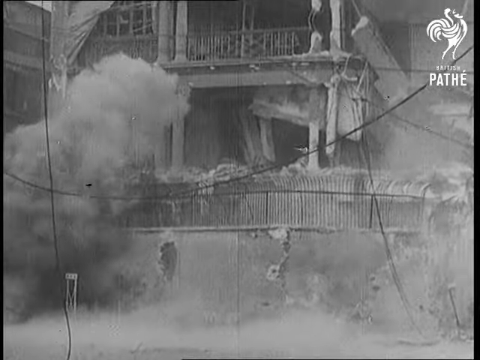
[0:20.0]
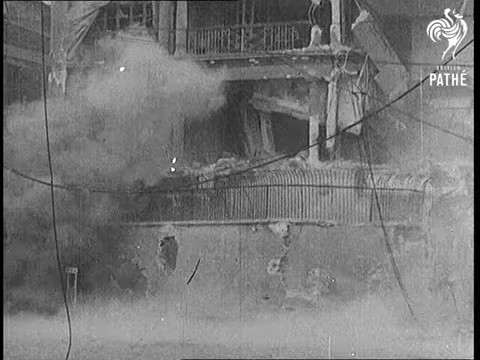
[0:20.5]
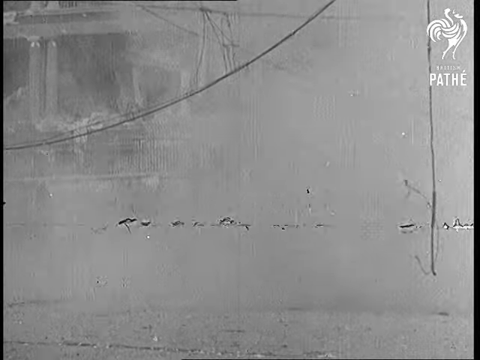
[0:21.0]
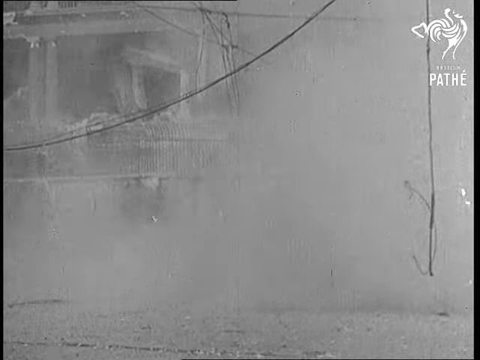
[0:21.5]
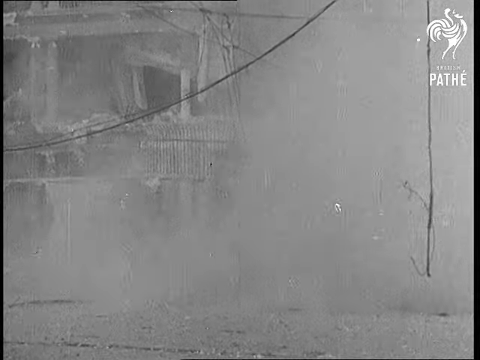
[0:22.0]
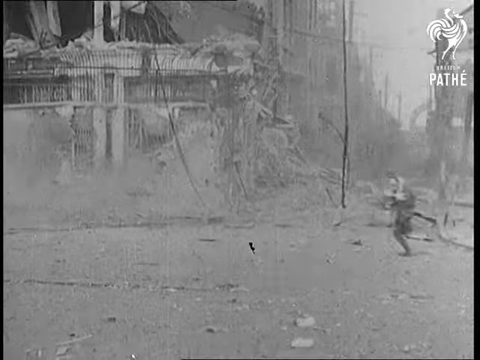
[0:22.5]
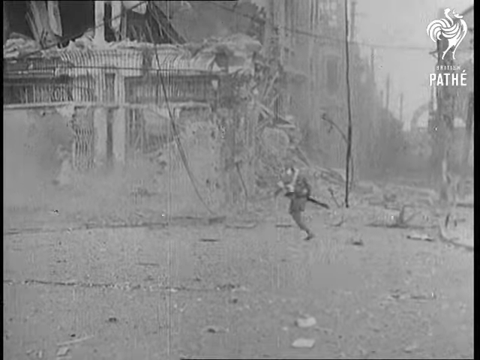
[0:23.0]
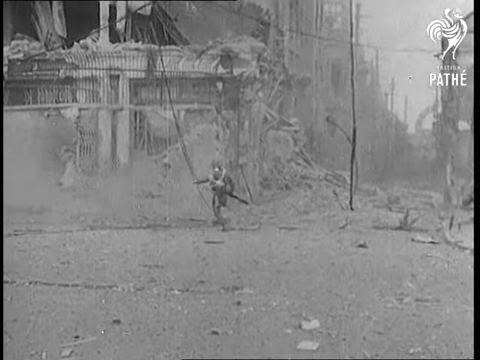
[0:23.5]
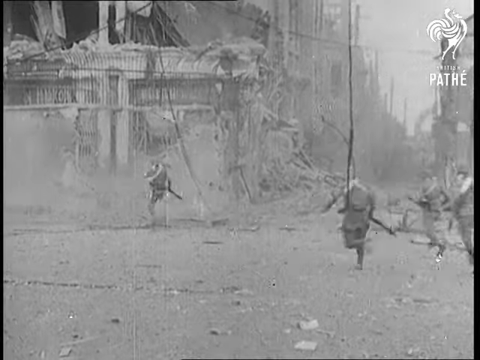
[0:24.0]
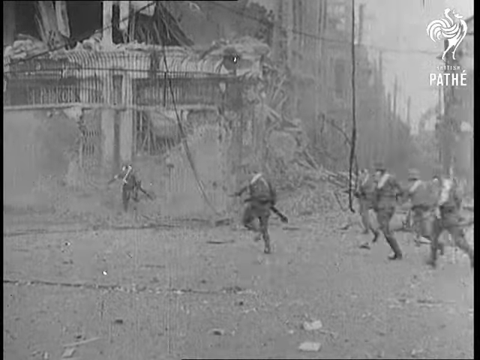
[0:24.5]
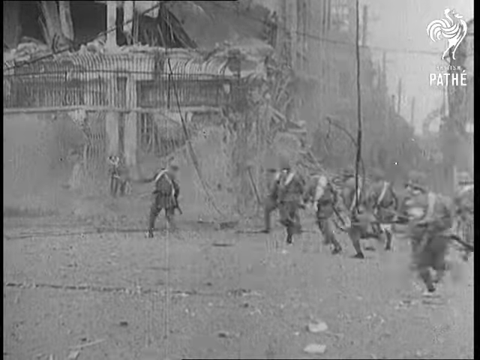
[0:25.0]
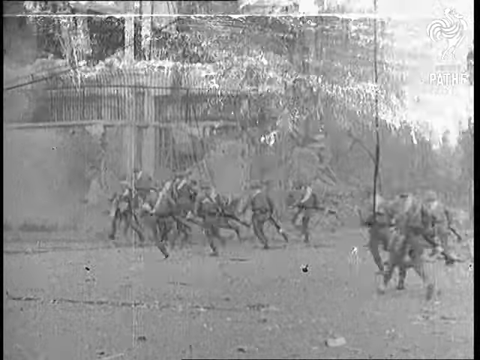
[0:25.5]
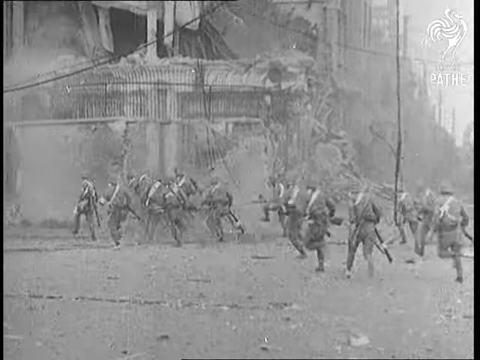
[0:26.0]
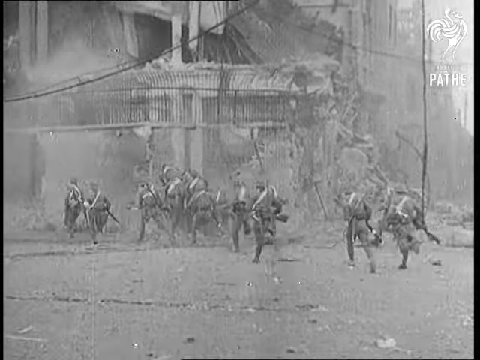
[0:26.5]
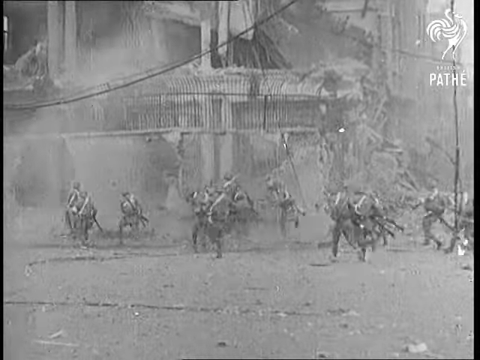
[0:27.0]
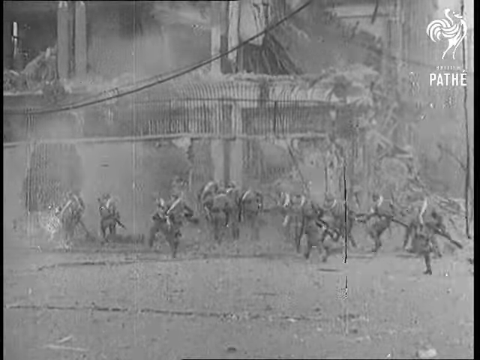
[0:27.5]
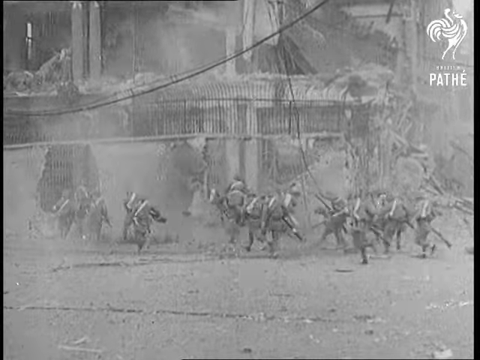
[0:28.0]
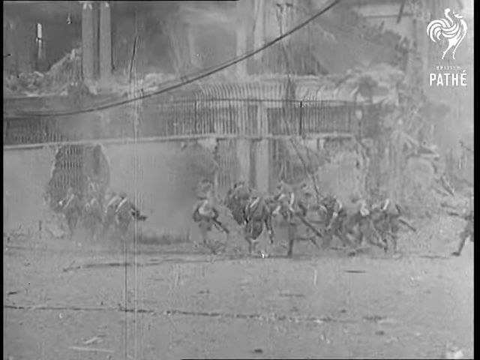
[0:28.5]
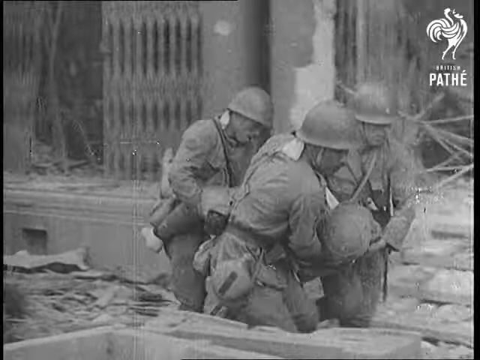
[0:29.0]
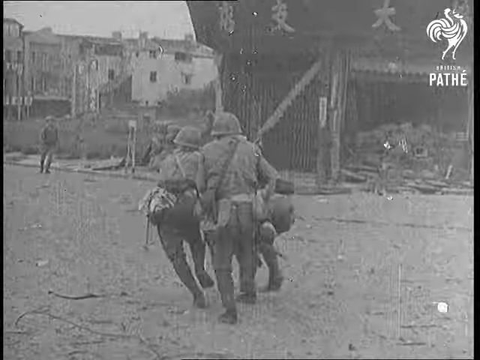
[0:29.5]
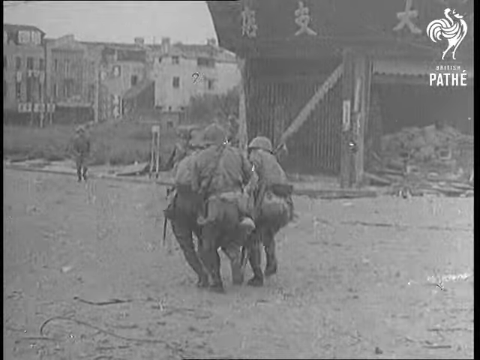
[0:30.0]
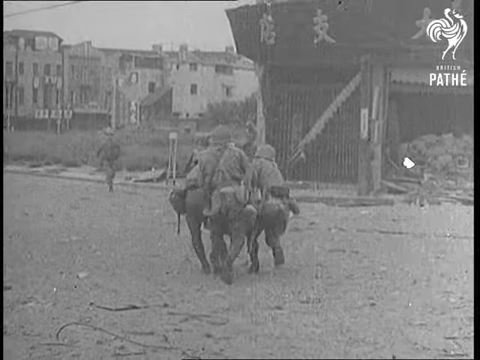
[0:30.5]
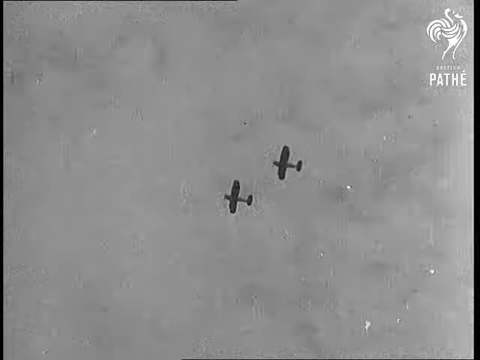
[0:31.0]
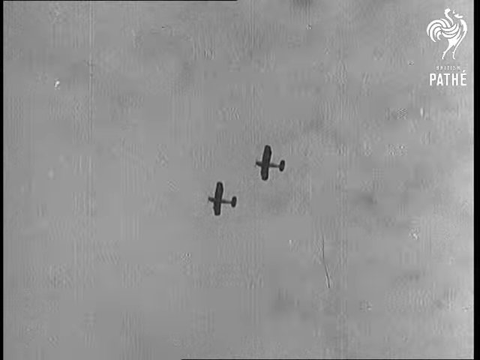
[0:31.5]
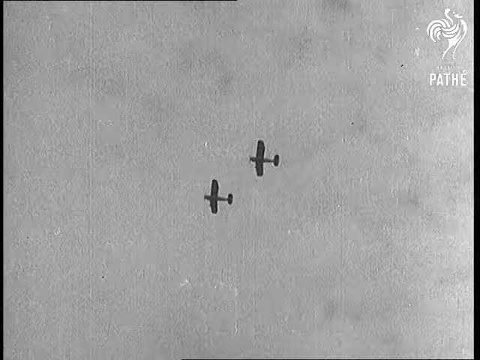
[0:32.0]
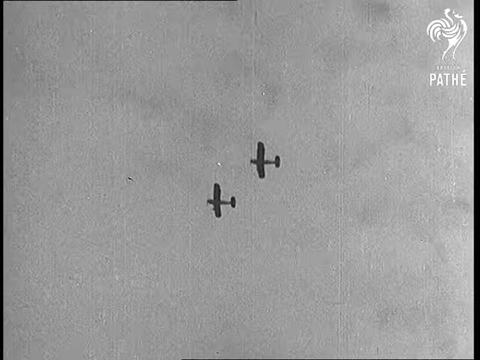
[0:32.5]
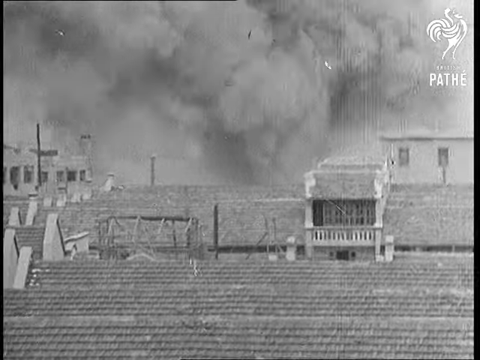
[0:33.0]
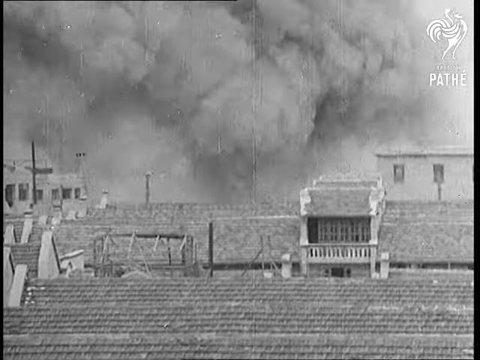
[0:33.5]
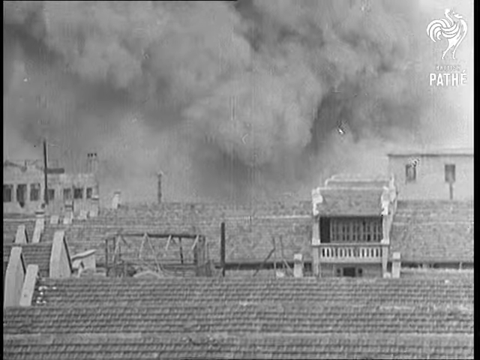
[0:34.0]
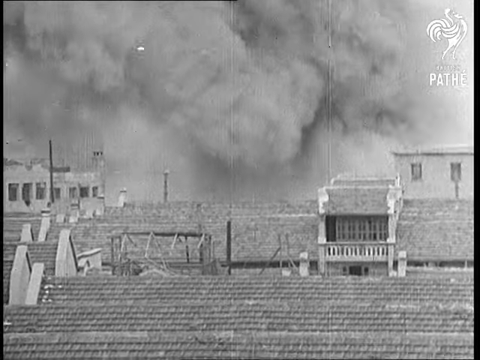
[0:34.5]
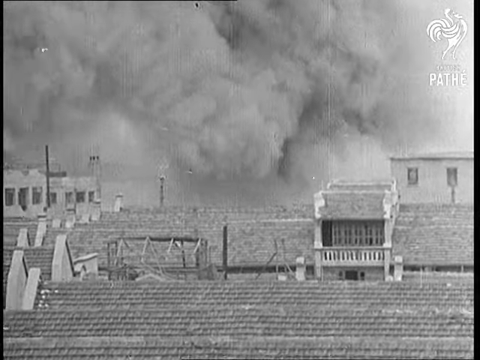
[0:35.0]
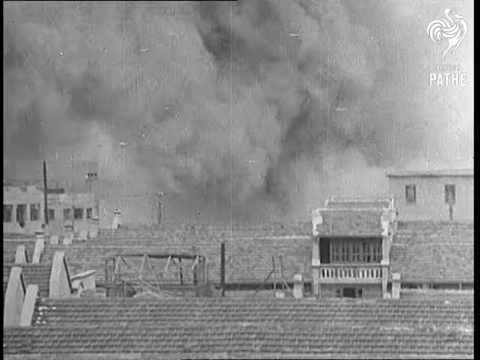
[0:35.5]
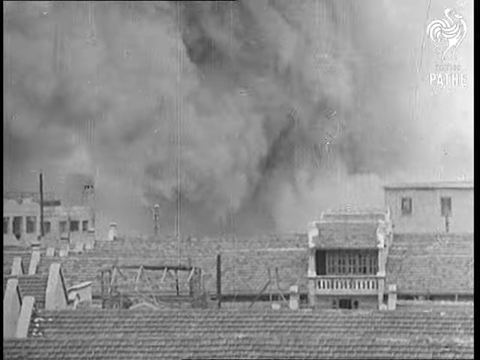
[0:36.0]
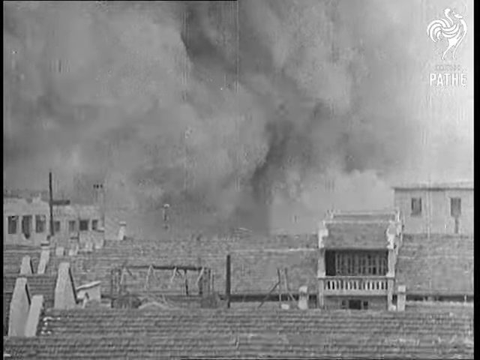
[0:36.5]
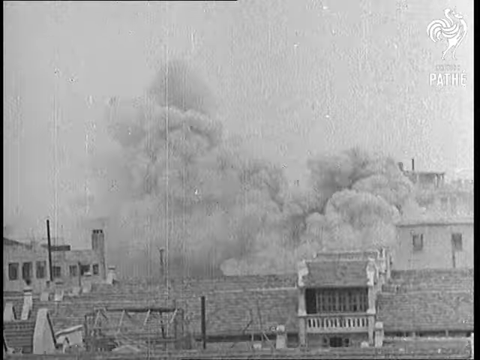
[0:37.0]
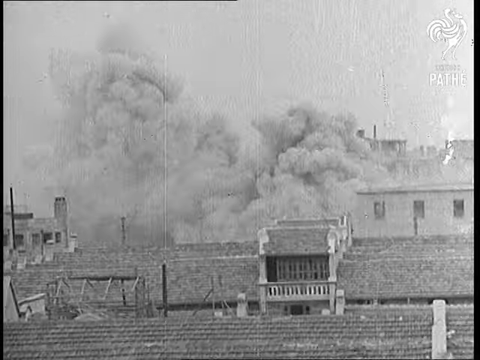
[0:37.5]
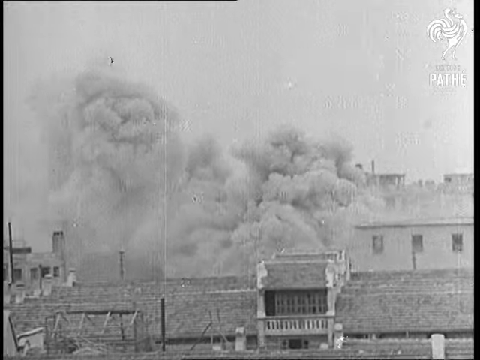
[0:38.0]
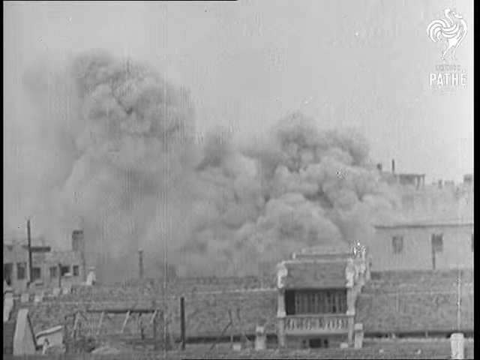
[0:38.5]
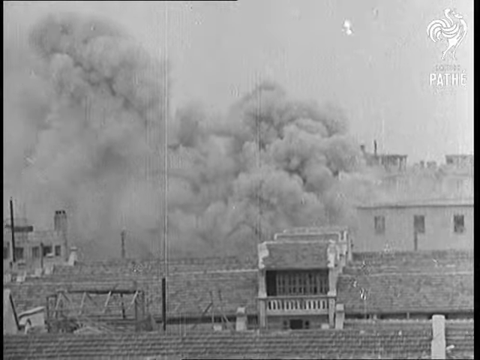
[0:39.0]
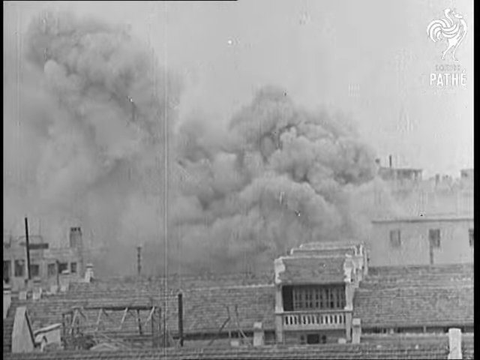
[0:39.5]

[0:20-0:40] In black and white, a big explosion of thick smoke occurs in roughly the left half of the screen, then clears. A group of soldiers runs very quickly toward the explosion, maybe through a hole they have blown in a wall, and they are then seen carrying what looks like an injured soldier out. More bombs, destruction and smoke follow, along with what appear to have once been beautiful buildings, now in rubble. All the soldiers carry long rifles, wear hard hats and run very quickly. Airplanes fly overhead, buildings are on fire, and there is a lot of smoke and destruction, with hanging wires or ropes from the destruction.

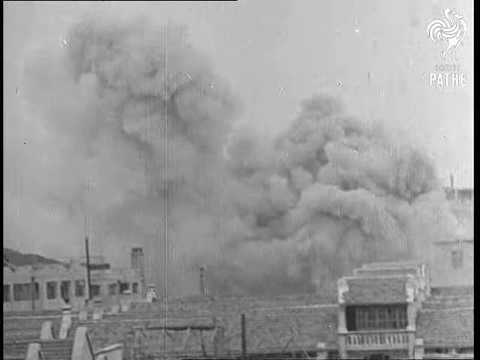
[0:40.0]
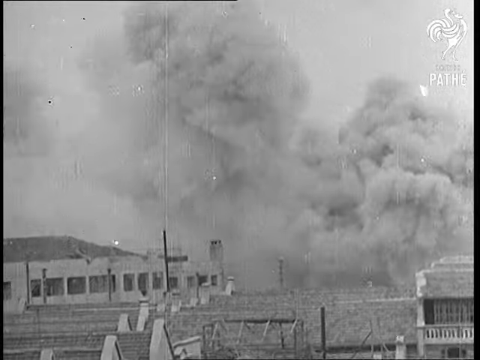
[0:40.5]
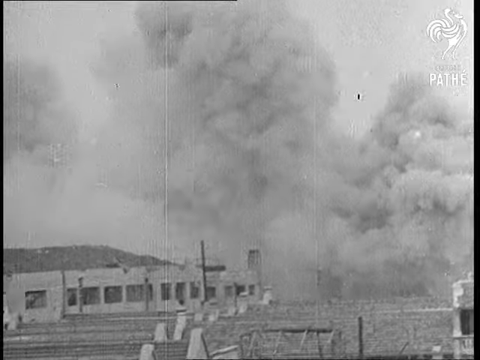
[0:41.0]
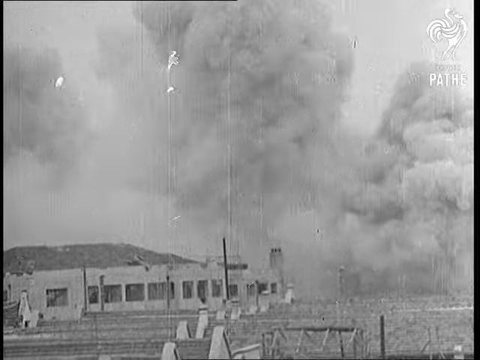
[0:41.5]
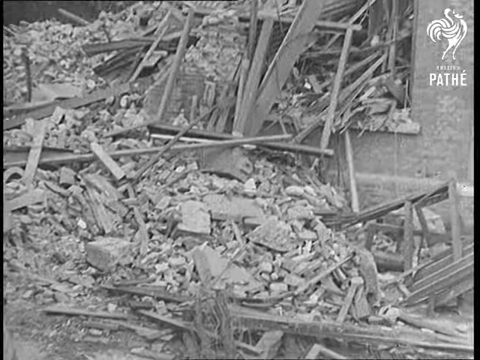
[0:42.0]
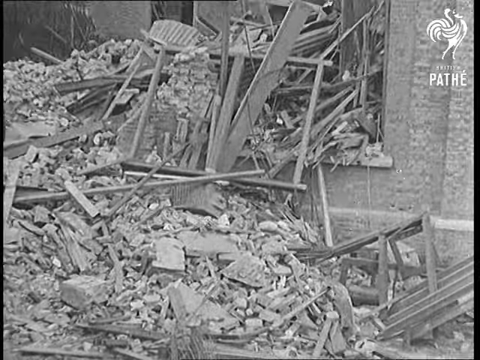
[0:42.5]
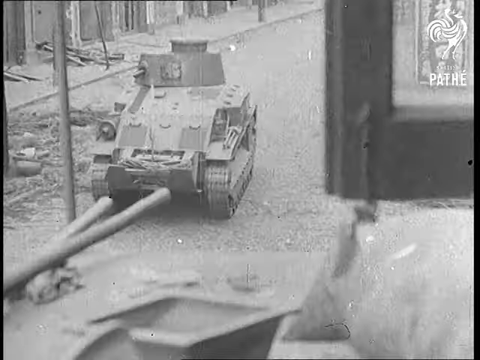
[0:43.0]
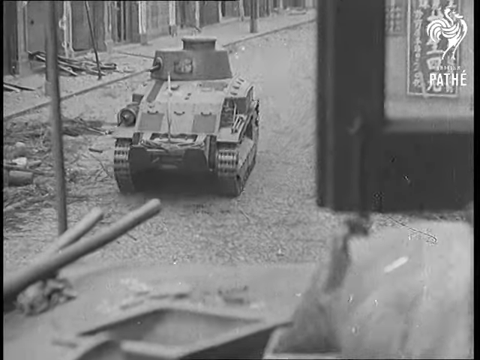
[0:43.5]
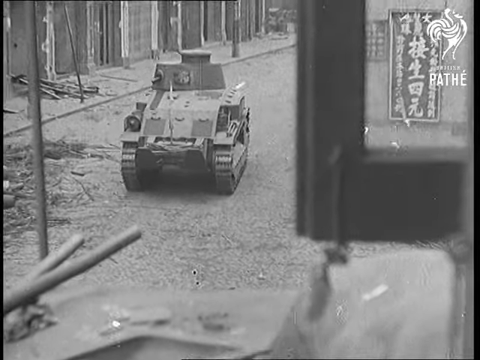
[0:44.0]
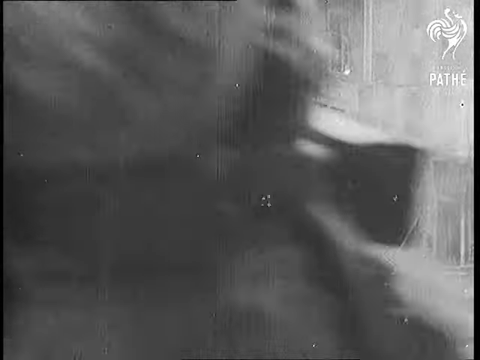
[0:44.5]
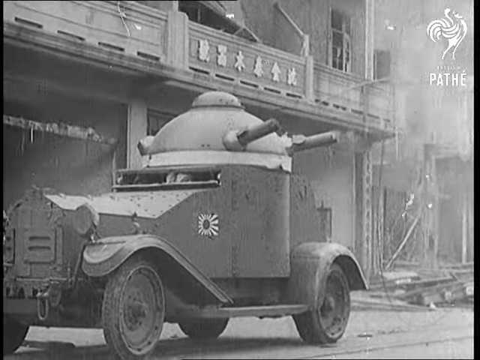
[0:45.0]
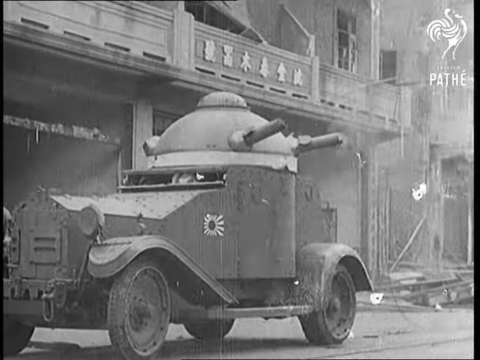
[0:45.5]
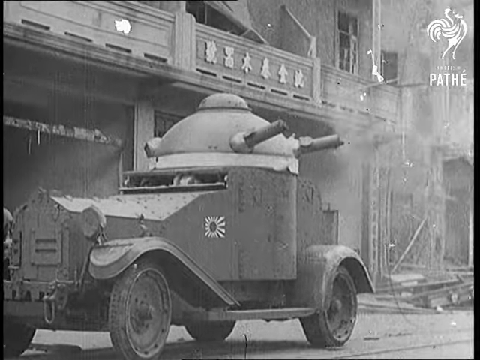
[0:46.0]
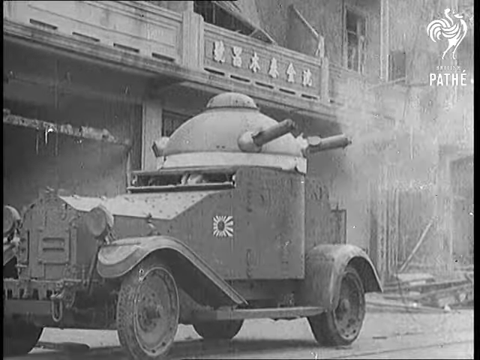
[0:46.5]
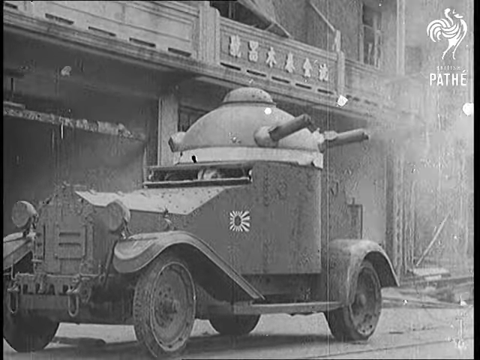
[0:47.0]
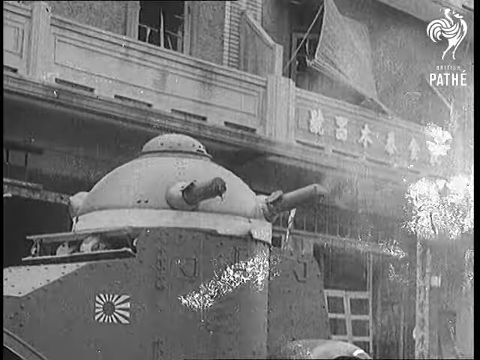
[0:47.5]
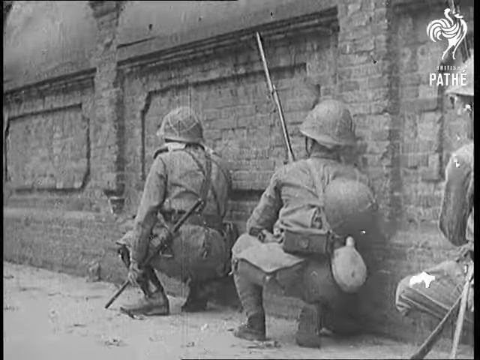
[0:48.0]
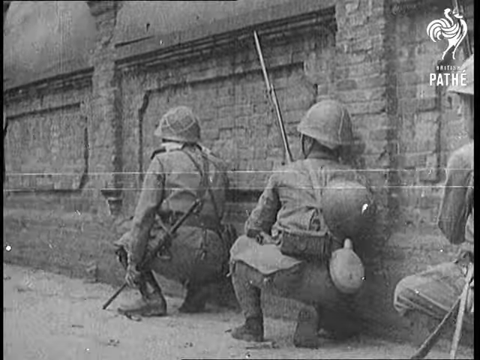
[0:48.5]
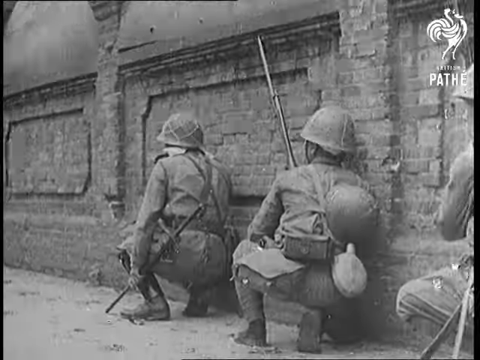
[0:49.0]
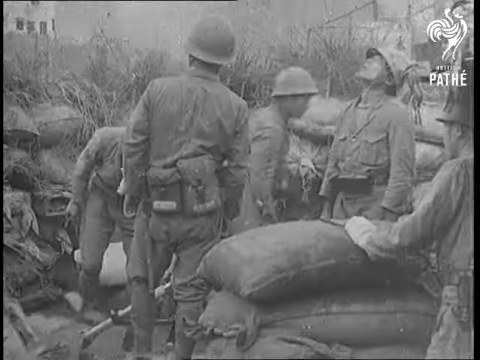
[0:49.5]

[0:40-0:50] In black and white, a lot of smoke rises from the top of what looks like a roof. The shot switches very quickly to a closer view of complete rubble and destruction, with a lot of broken wood pieces on the floor. It then changes to a street-level view of a funny-looking Chinese tank rolling through town, first seen from the back as it moves forward, then a front view of another tank. This tank is shaped like a shop vac, round and robot-looking, with guns sticking out the top, and its front is shaped like an old-fashioned car. It is all metallic, has a sun symbol on it, and has wheels like an old-fashioned car instead of tracks. Smoke emanates from its guns as it shoots. The video then moves through scenes of soldiers in battle: a couple of soldiers crouched against a wall, then a larger group of soldiers looking up and stacking sandbags in a more desolate-looking area, and finally a very quick shot of soldiers.